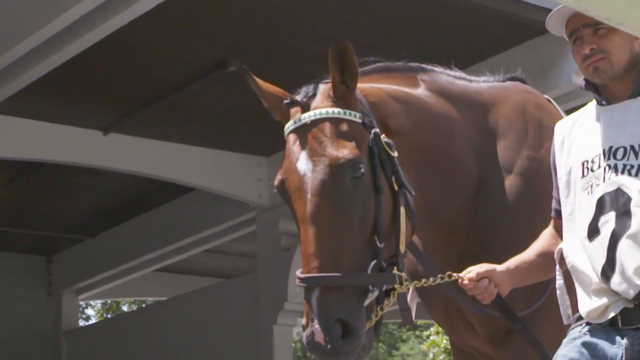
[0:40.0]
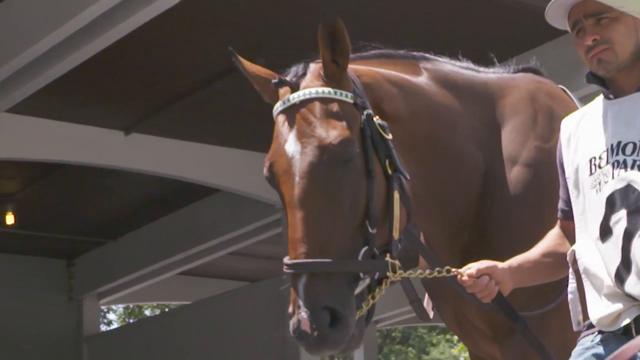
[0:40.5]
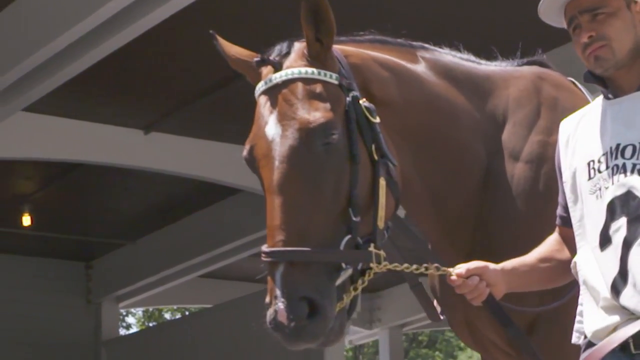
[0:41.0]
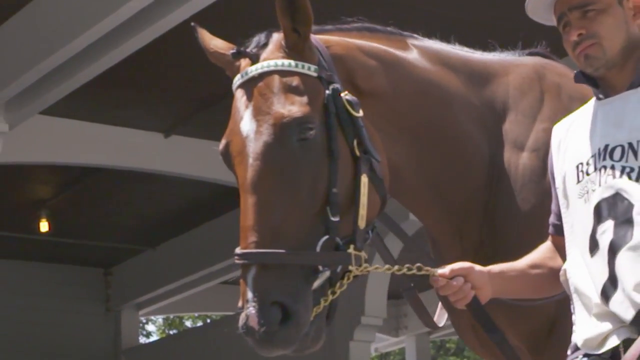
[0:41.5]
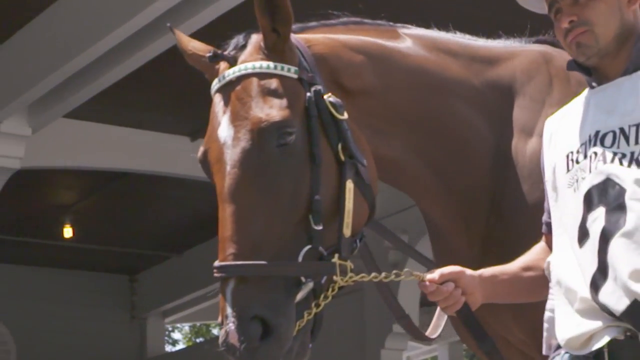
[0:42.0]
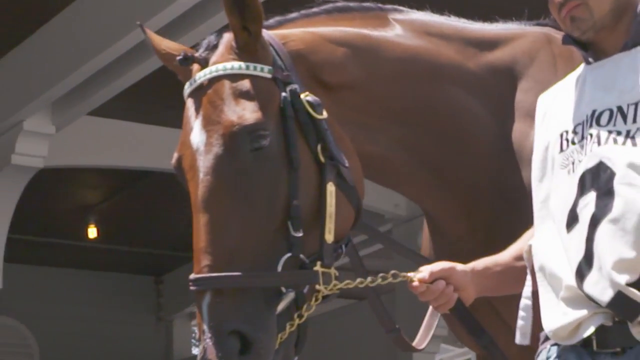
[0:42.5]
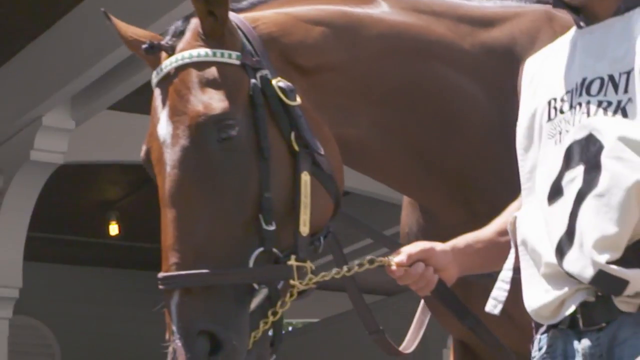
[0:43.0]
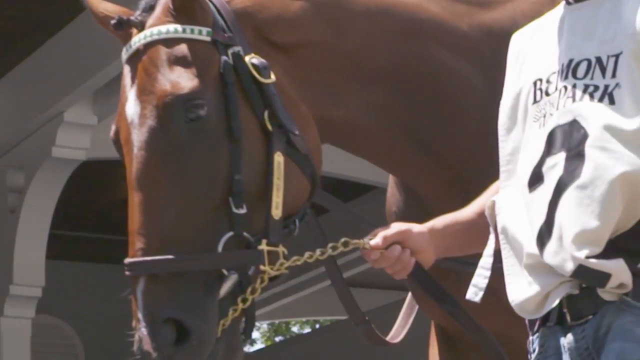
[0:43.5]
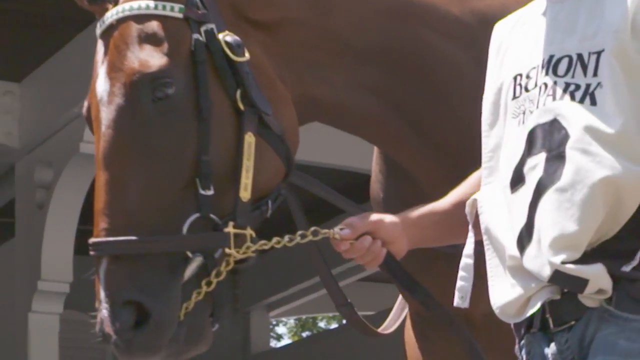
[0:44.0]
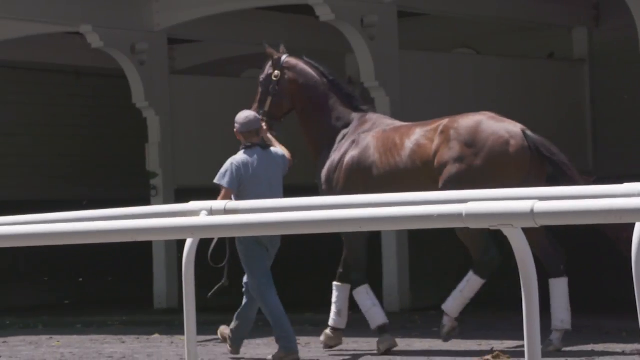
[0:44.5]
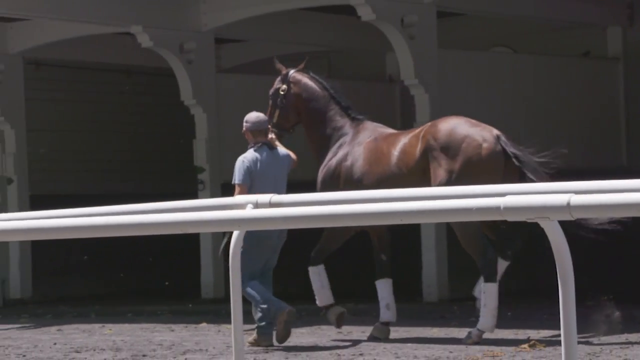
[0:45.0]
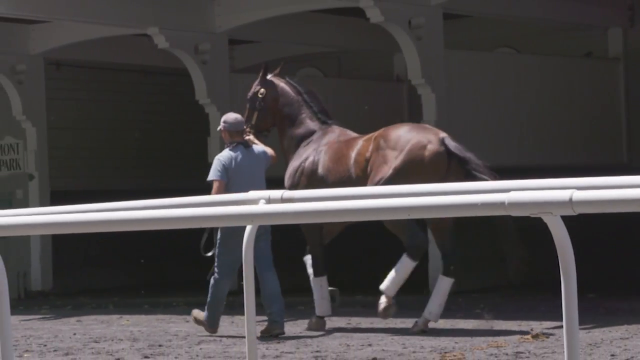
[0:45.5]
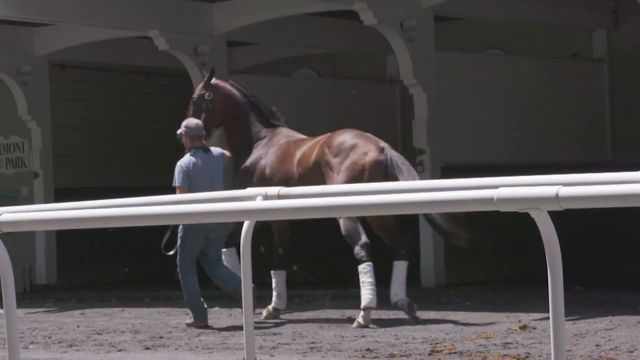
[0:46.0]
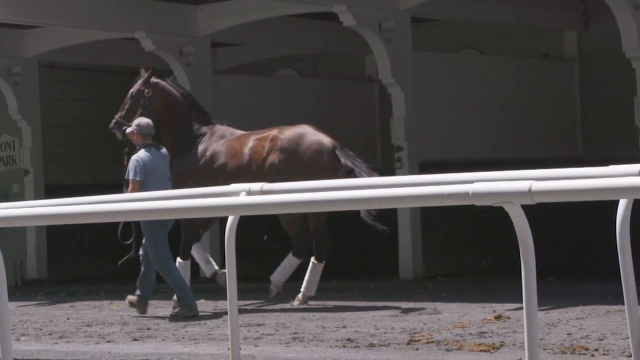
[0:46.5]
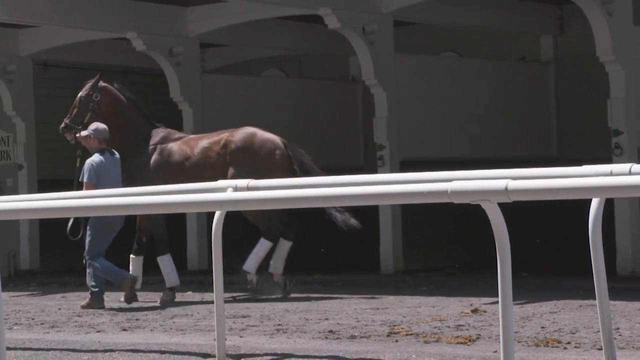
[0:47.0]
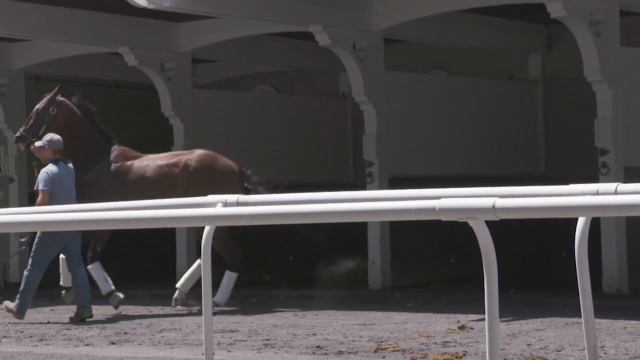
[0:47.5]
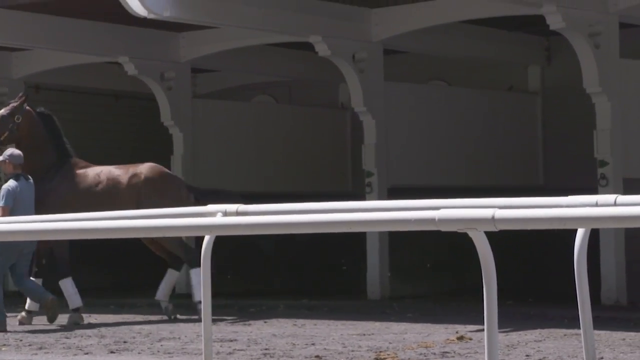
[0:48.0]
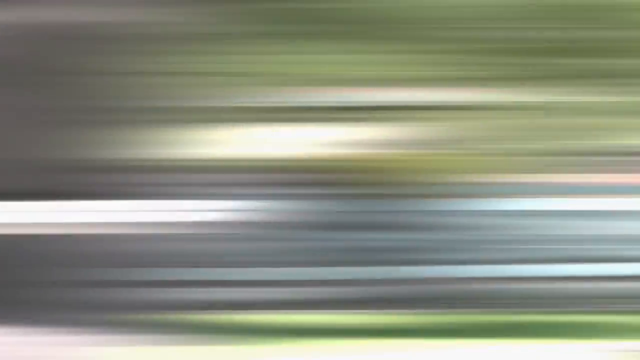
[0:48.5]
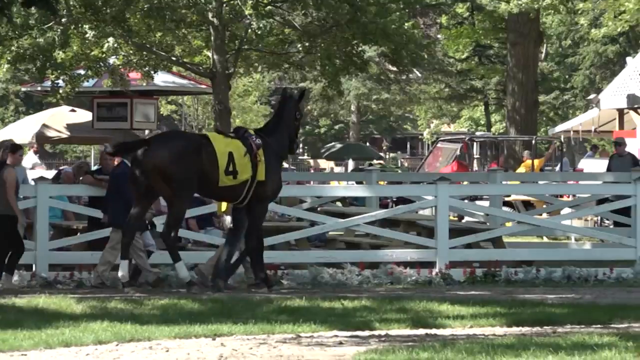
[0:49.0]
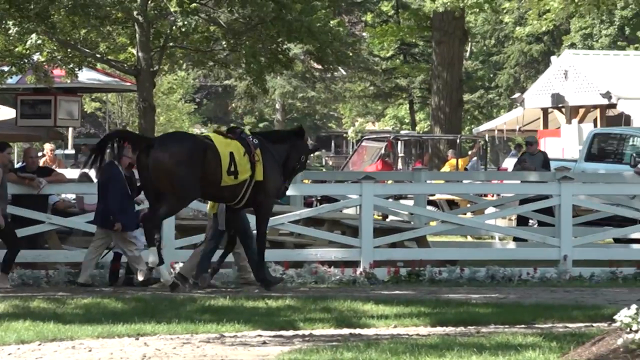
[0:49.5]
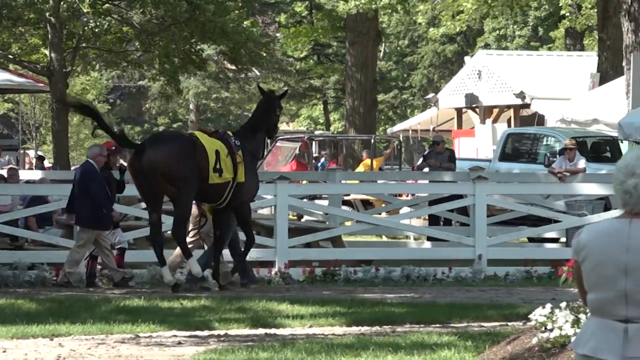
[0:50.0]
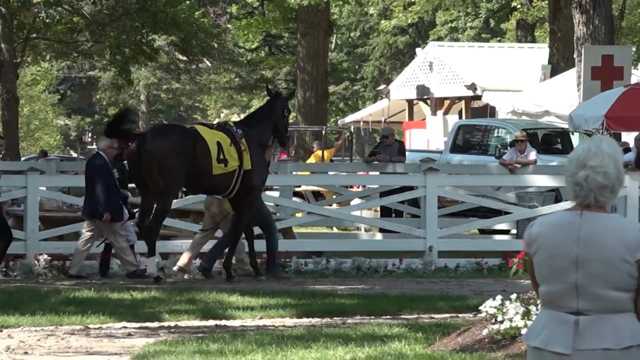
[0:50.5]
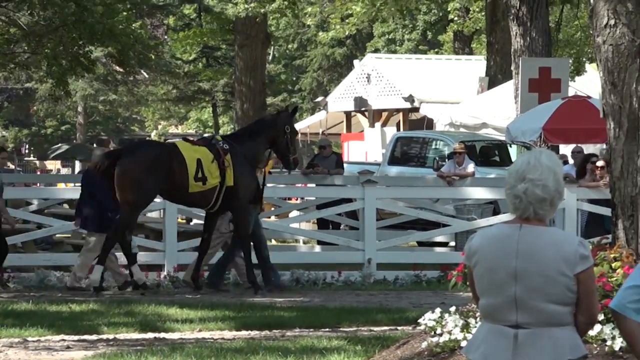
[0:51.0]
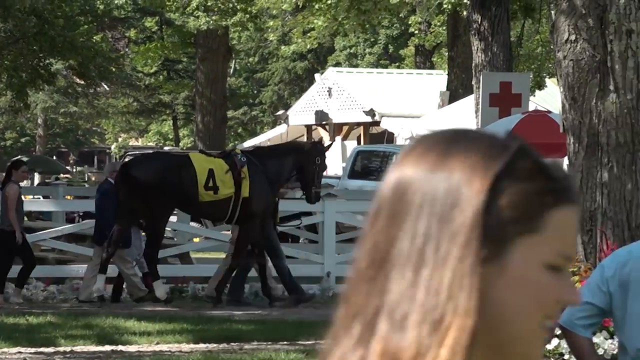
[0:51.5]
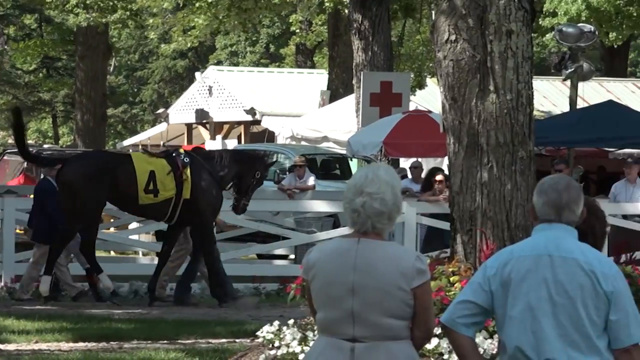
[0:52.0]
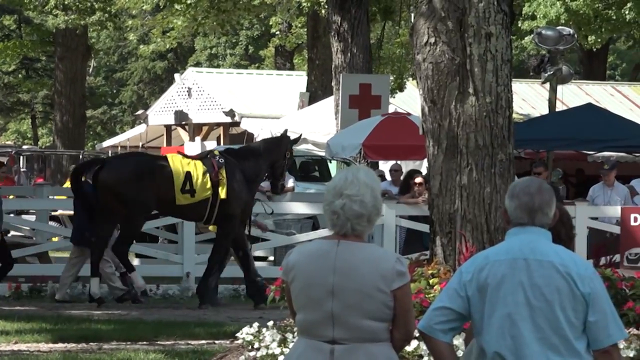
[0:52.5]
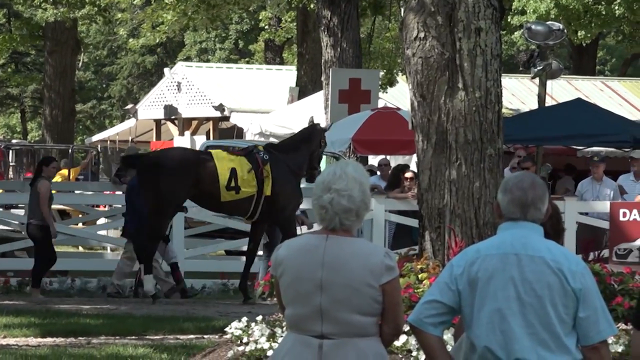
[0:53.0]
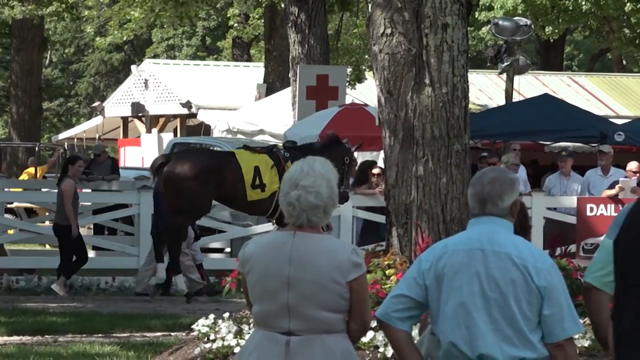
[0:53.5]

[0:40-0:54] A man wears a white T-shirt that says "Belmont Park number two." He holds a chain attached to a horse and slowly walks it around; the horse has white booties on. Number four is shown inside the fence, trotting around, with people walking next to him, including a lady in black. People stand outside the fence watching the horse. The video goes back to the people leaning against the gate where text reads "playing from the attic," showing them looking at papers, at the horses and at their phones. The inside of the Aqueduct racetrack is then shown, where people place their bets: a white countertop, red machines where workers enter the information, and two screens up top, one showing the numbers of the racers and race information, the other showing the horses on the track. Two gentlemen are helped by a balding older man. The camera pans across to show the white betting ticket, which lists the race they bet on and information about the race.